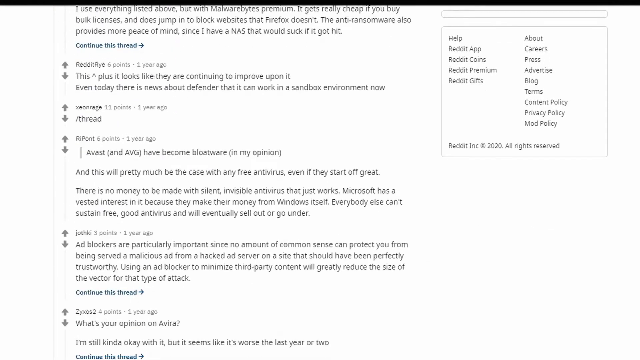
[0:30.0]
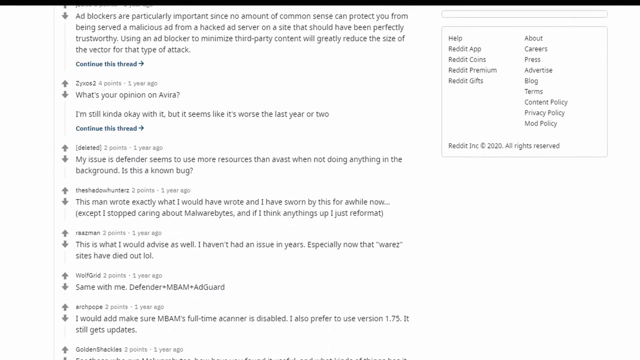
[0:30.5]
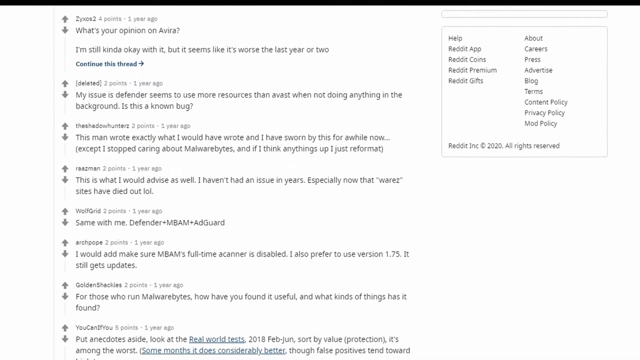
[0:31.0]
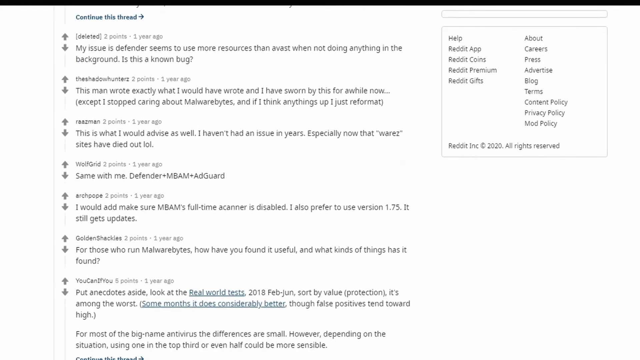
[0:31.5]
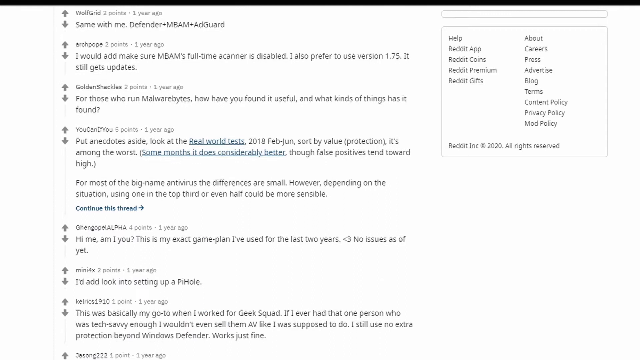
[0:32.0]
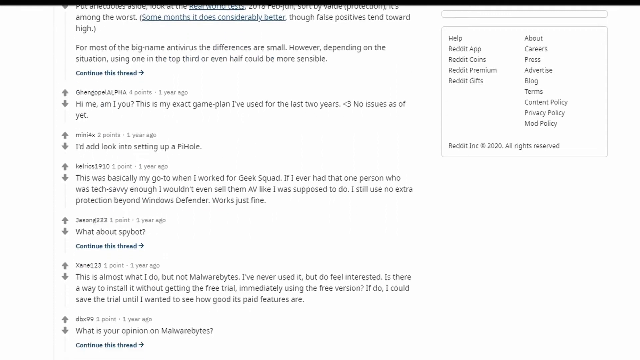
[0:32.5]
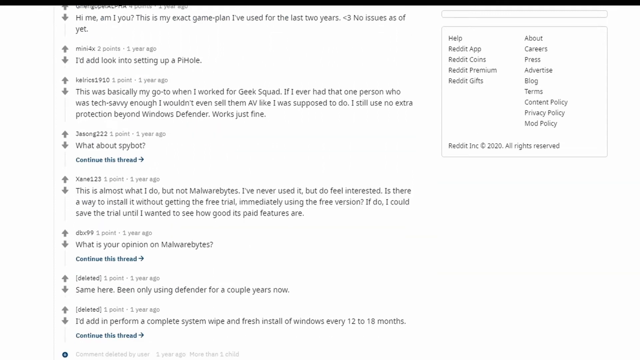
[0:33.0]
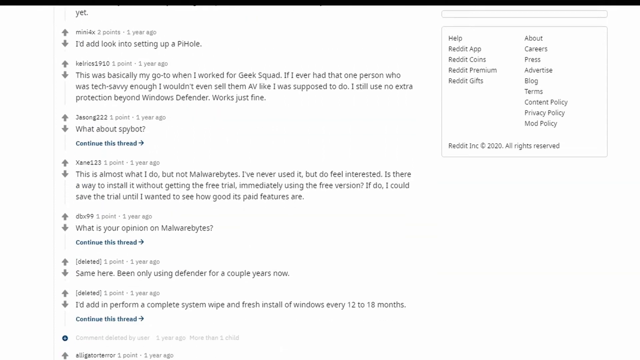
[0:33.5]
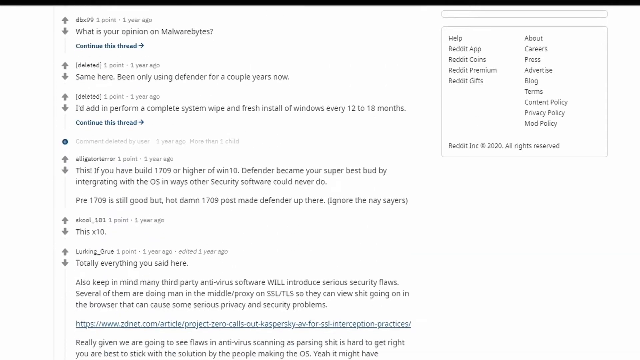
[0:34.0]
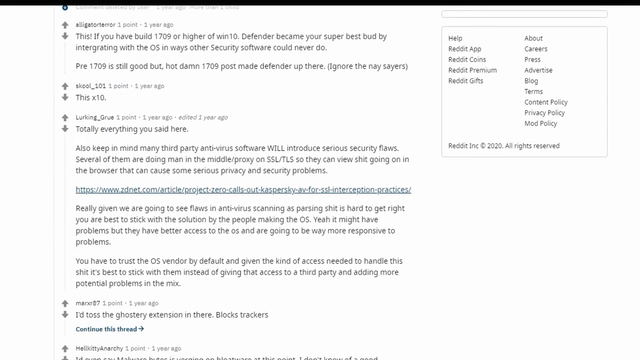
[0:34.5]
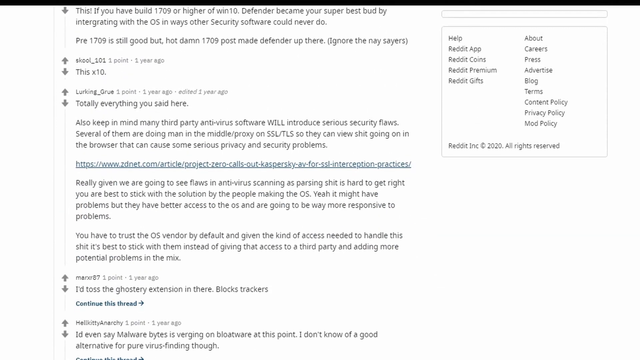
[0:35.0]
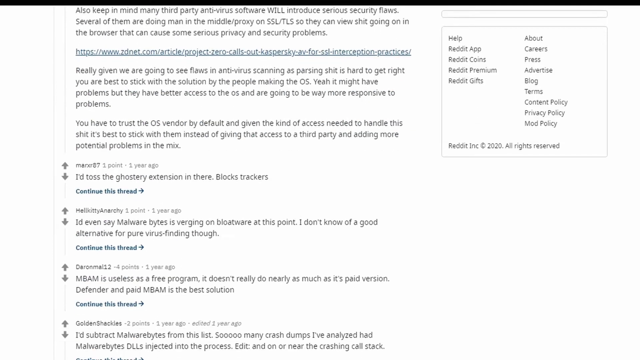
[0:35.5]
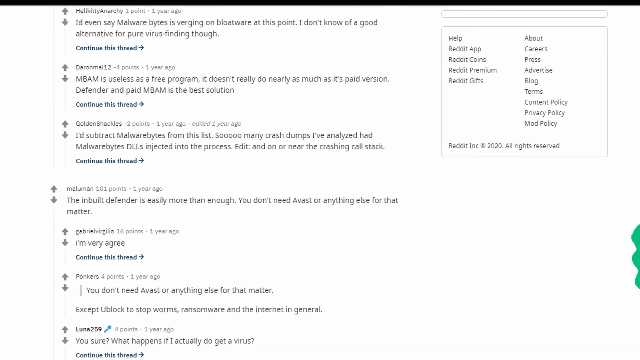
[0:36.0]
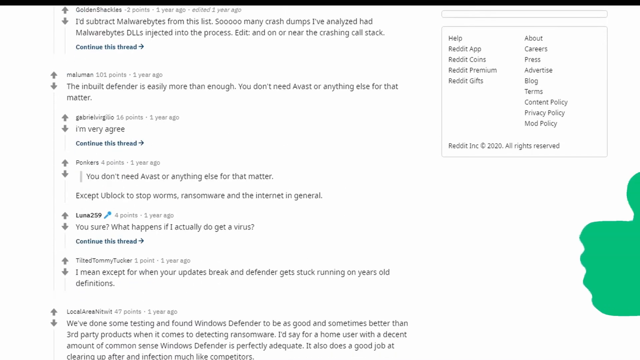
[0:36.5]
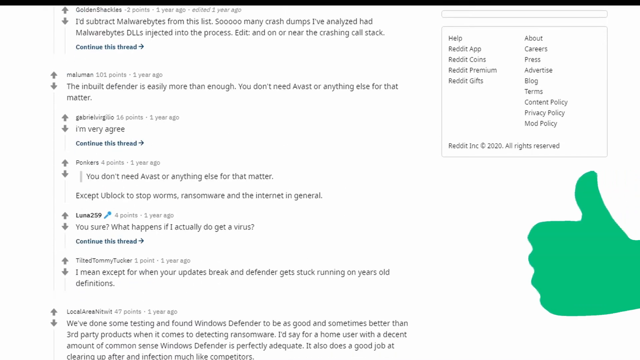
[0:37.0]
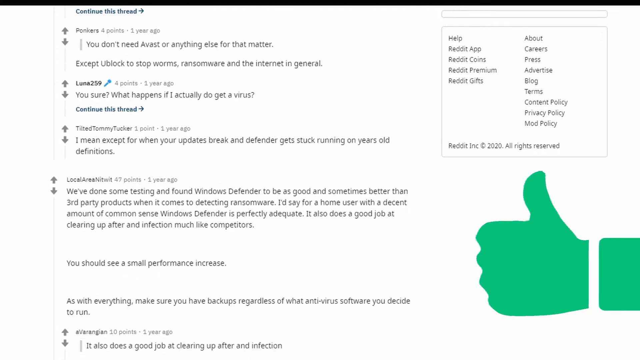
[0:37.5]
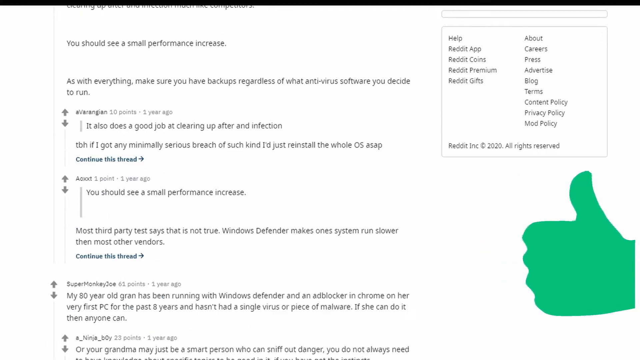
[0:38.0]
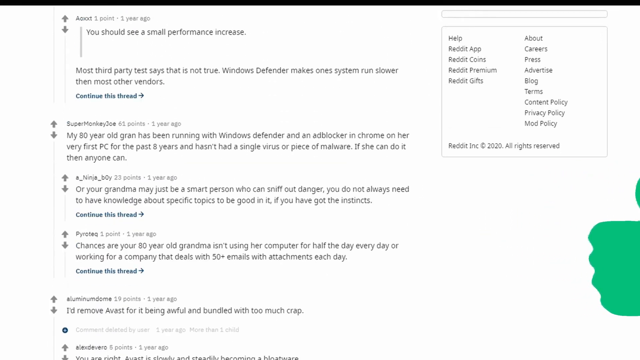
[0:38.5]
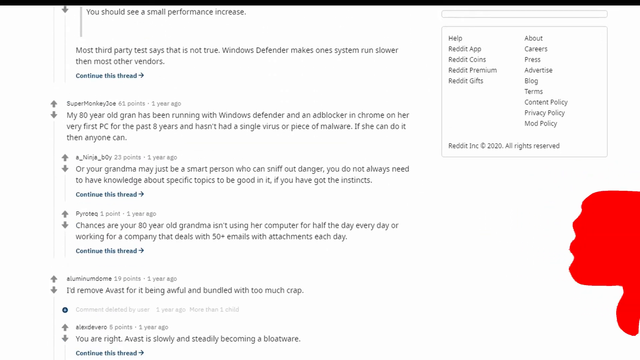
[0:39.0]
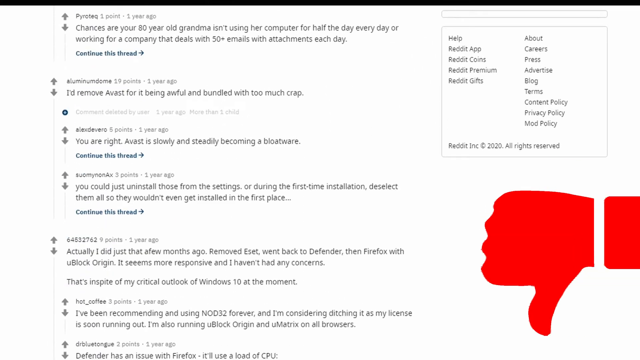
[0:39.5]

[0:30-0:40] The view stays on the Reddit page and scrolls down through the responses, whose general sentiment seems to be that the poster should probably just stick with Windows Defender. A green hand giving a thumbs up comes in from the right side of the screen, followed by a red thumbs down.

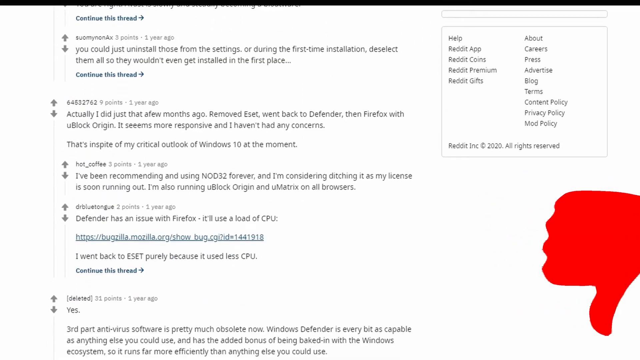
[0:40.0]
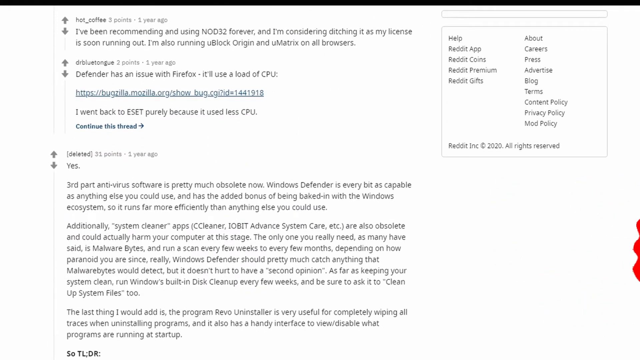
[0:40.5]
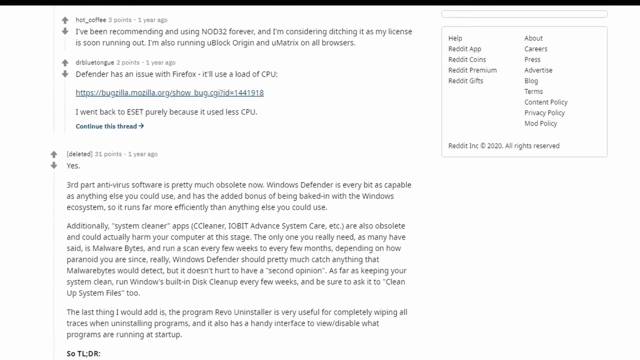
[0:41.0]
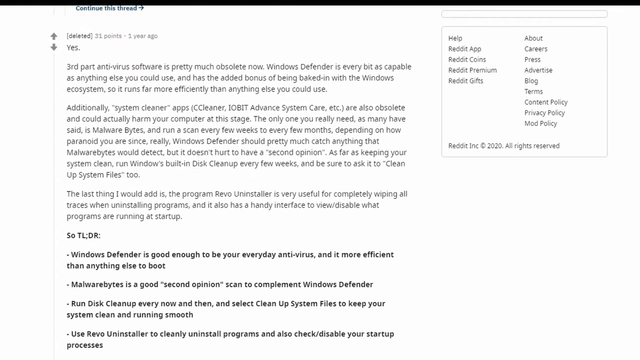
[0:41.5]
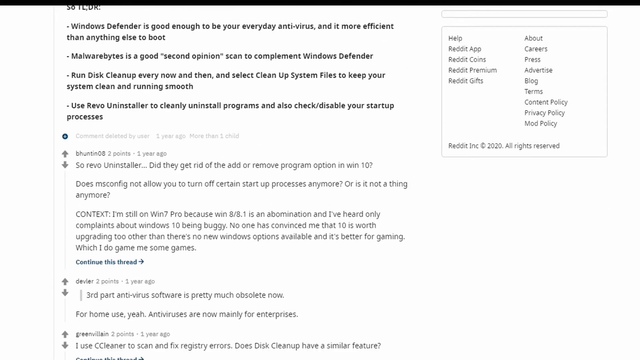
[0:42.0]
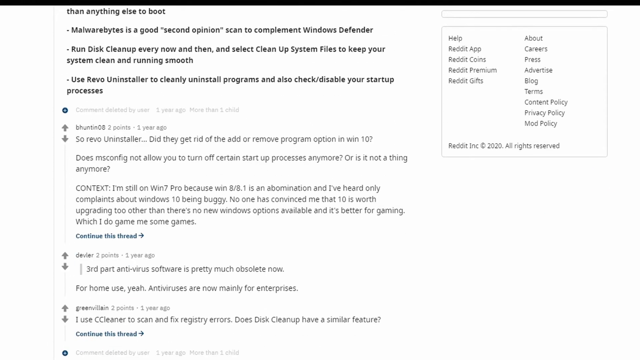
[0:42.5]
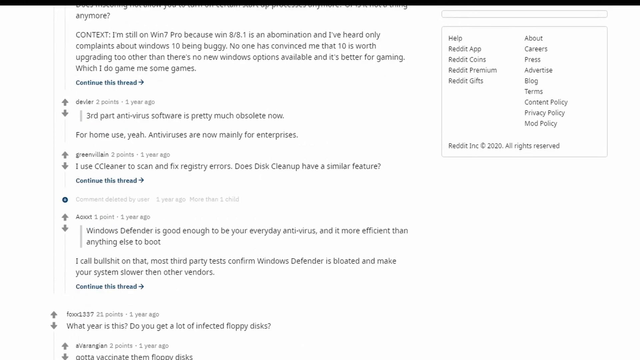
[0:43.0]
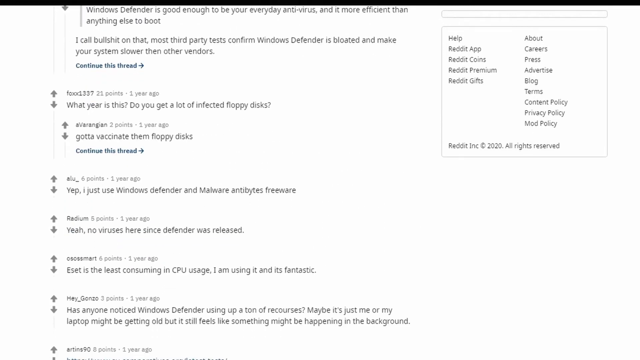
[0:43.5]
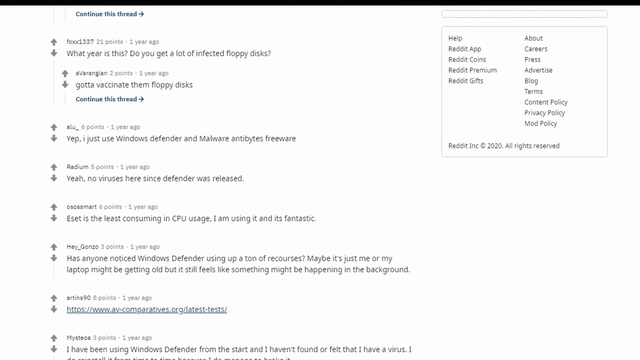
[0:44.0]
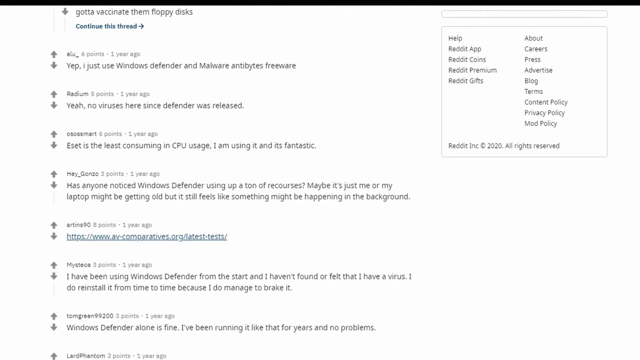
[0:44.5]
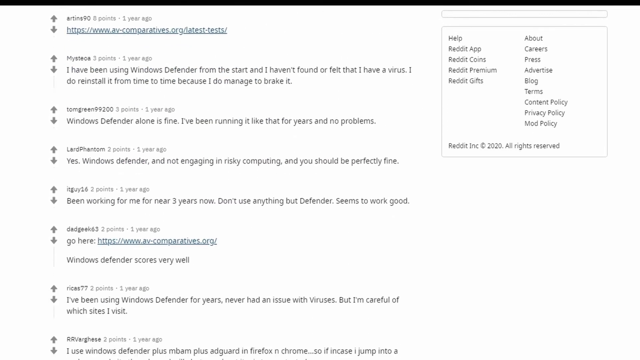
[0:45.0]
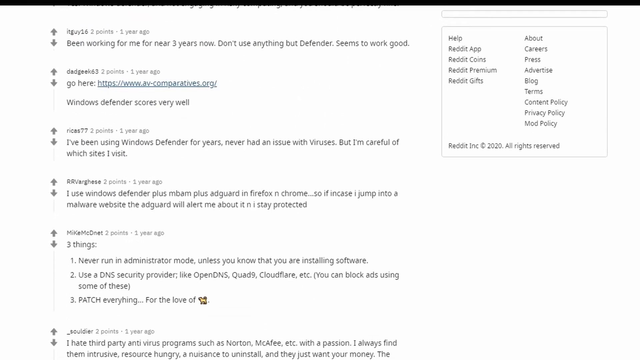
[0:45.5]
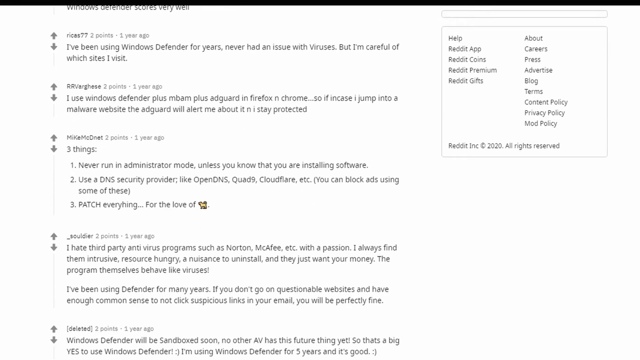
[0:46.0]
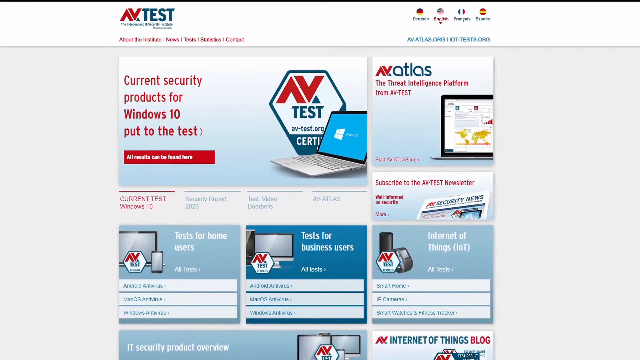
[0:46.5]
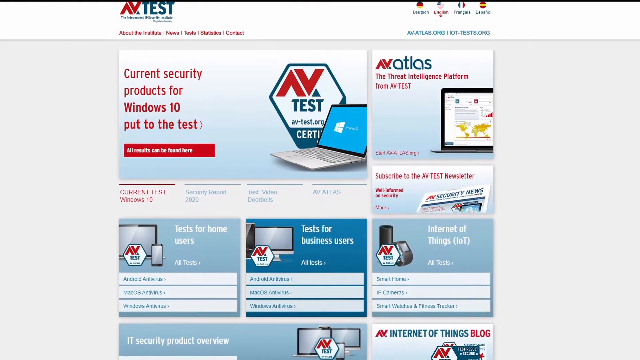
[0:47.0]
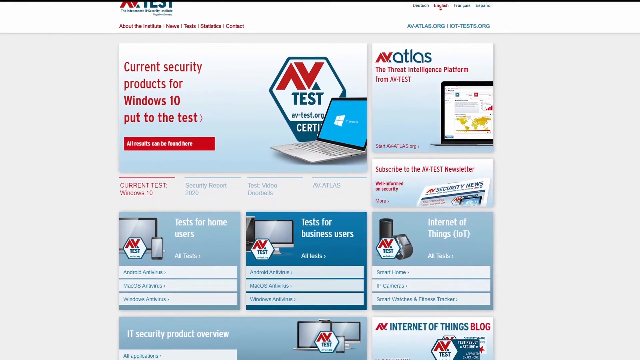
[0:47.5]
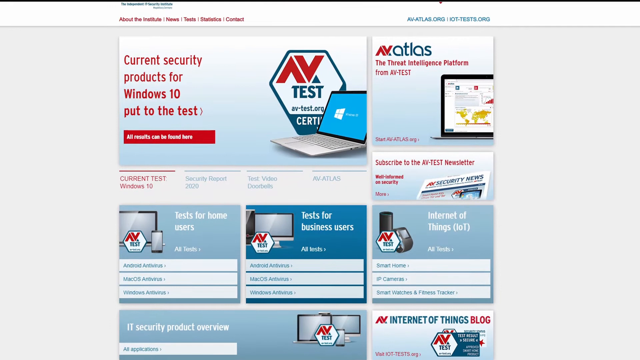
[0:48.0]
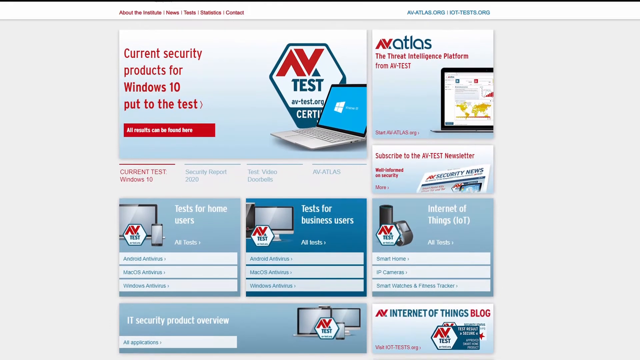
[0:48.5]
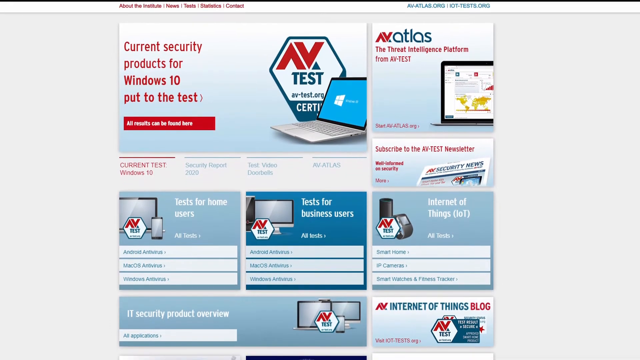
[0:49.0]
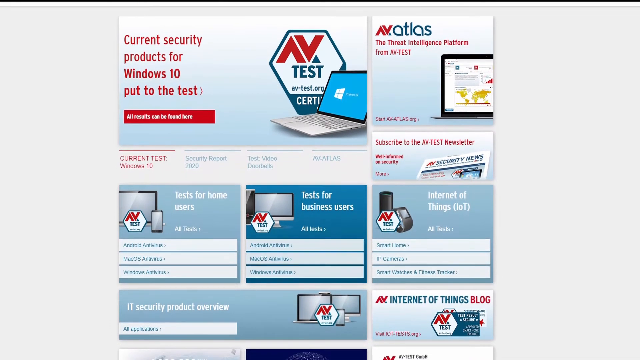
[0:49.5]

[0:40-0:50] The red thumbs down is on screen over the Reddit page. Scrolling continues, and the general sentiment again seems to be that people should just use Windows Defender and nothing else. The video then cuts to a page labeled "av.atlas" with the text "Current security products for Windows 10"; it looks like a line-up of security products for Windows 10.